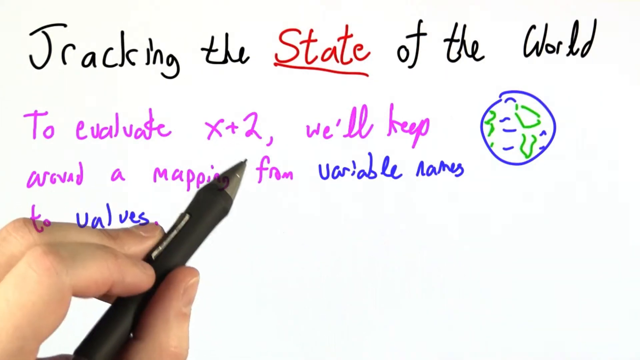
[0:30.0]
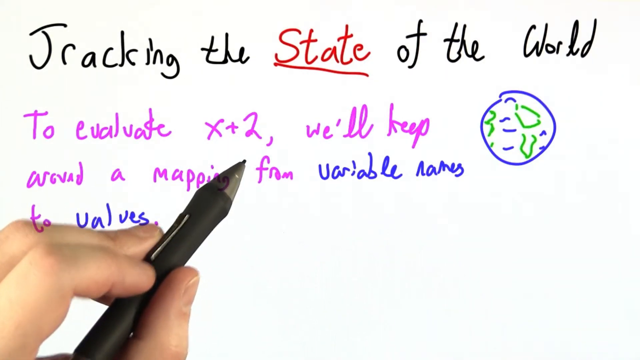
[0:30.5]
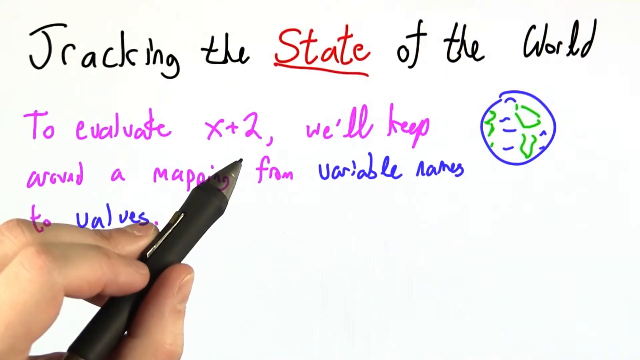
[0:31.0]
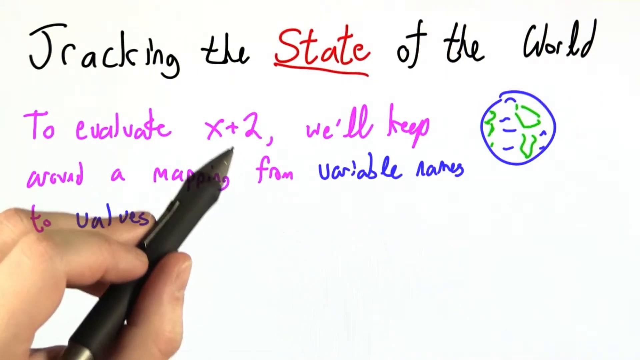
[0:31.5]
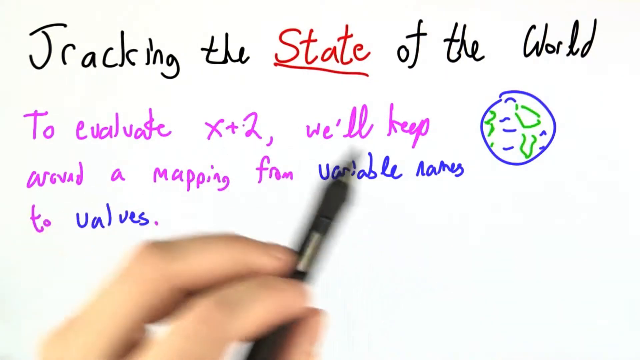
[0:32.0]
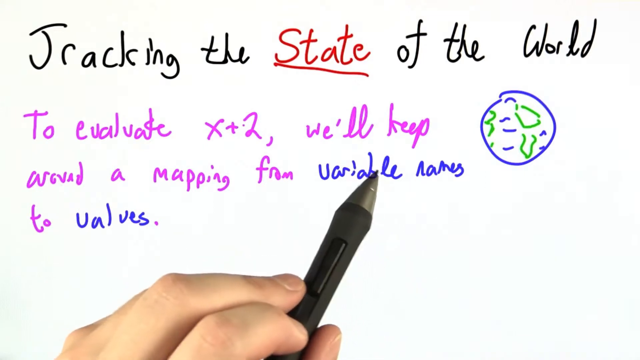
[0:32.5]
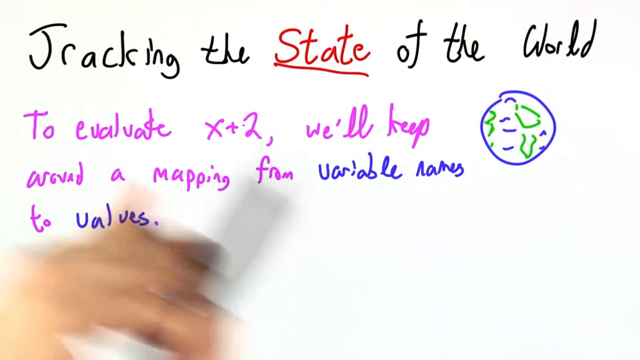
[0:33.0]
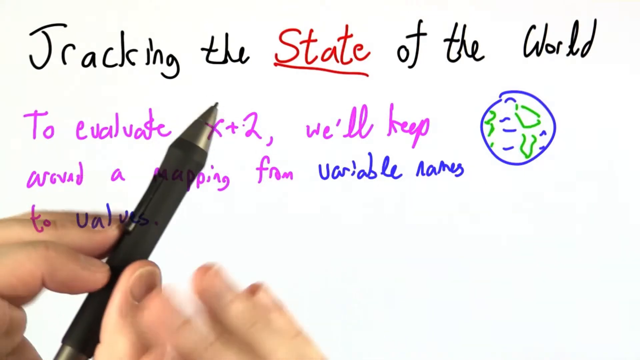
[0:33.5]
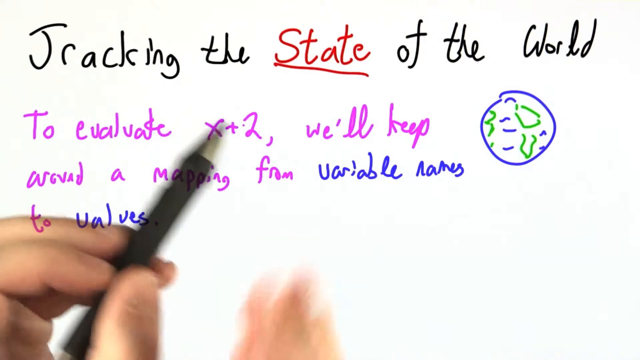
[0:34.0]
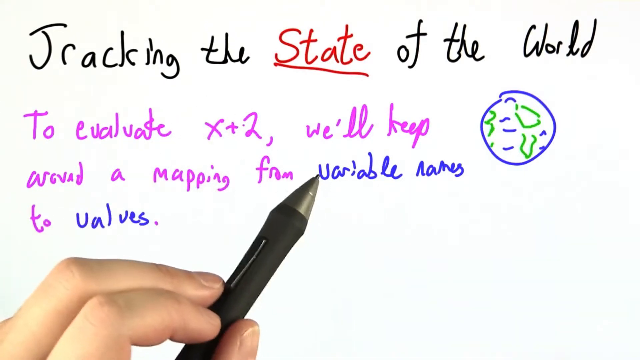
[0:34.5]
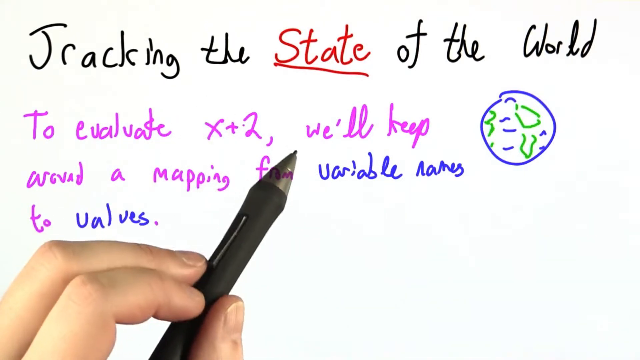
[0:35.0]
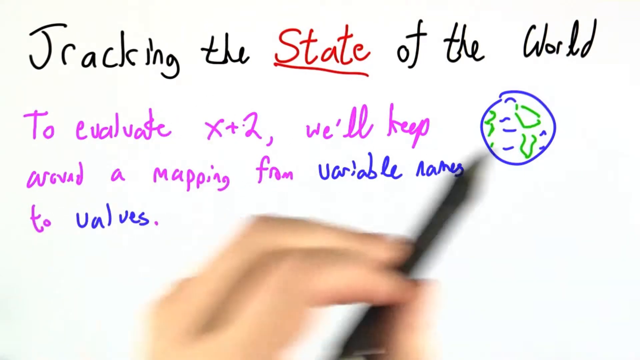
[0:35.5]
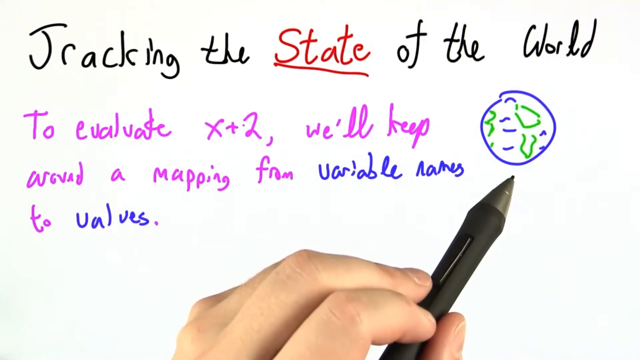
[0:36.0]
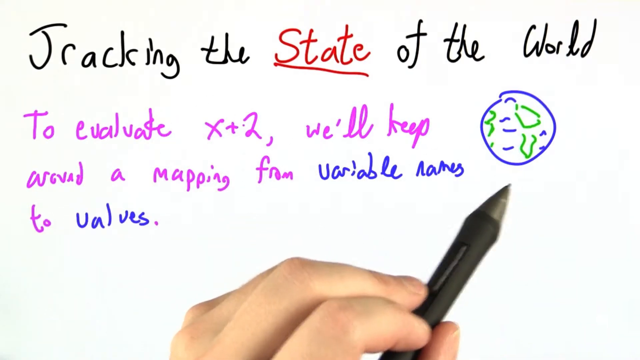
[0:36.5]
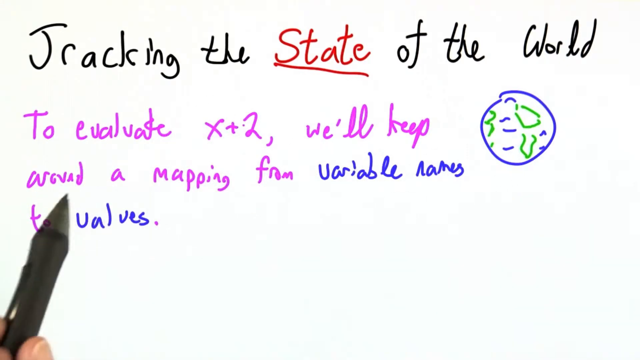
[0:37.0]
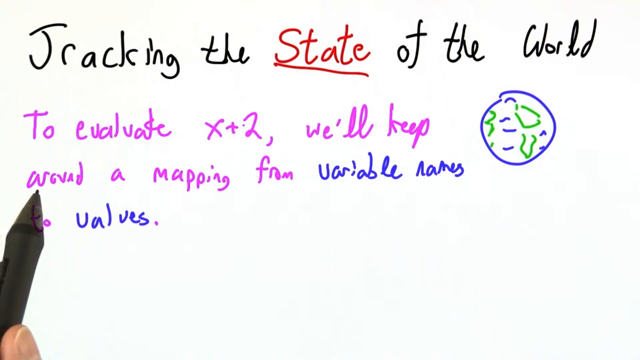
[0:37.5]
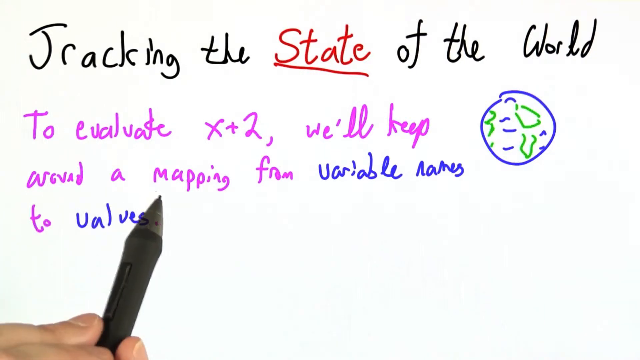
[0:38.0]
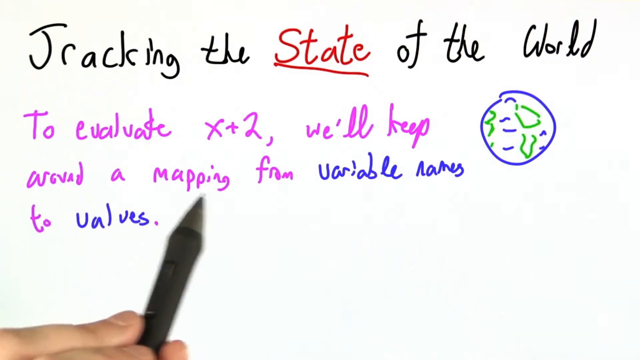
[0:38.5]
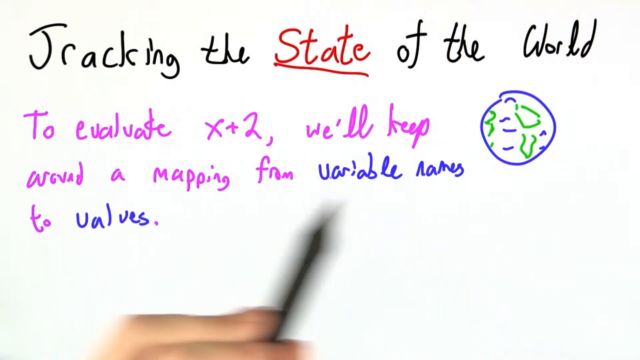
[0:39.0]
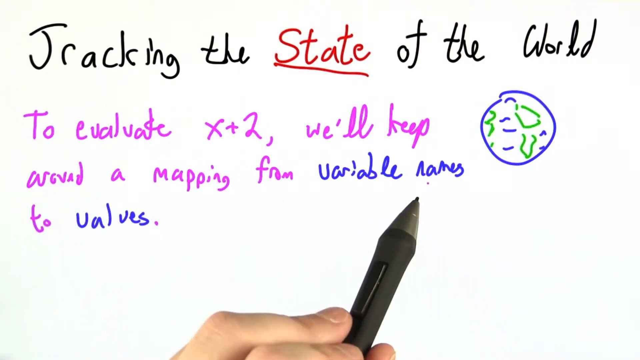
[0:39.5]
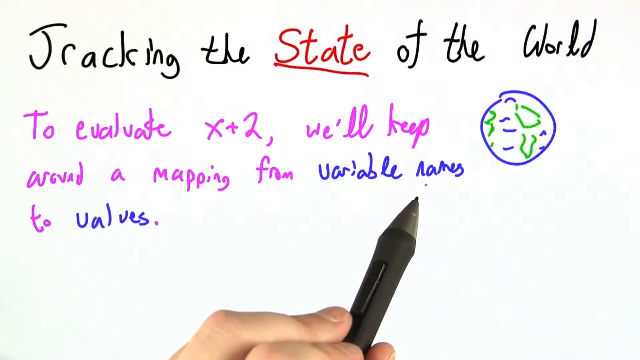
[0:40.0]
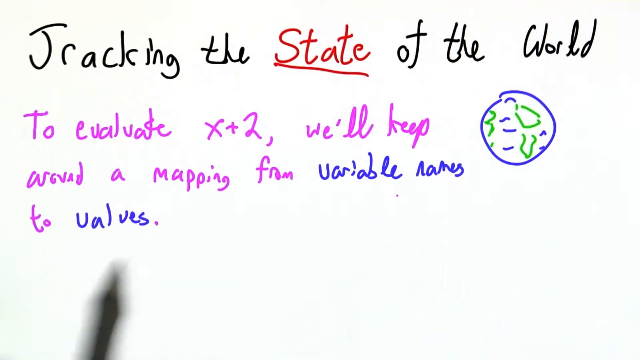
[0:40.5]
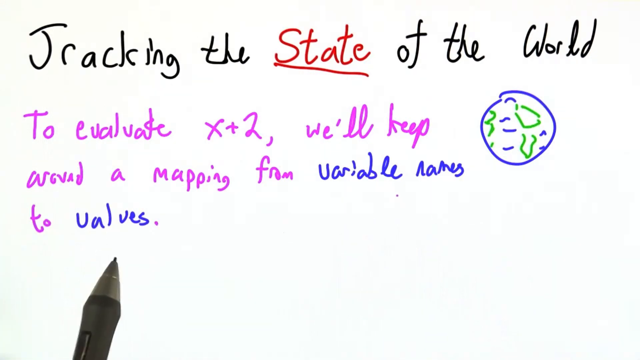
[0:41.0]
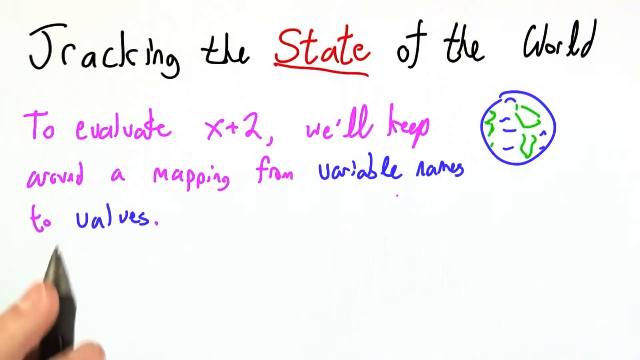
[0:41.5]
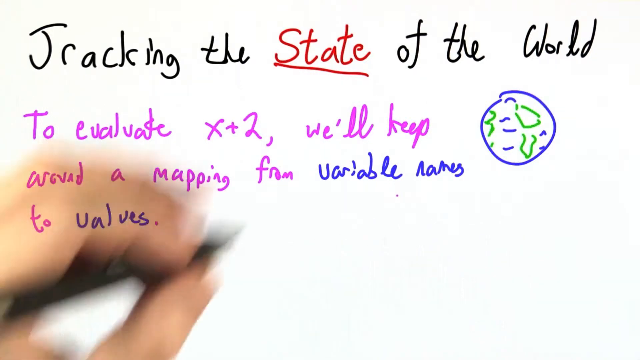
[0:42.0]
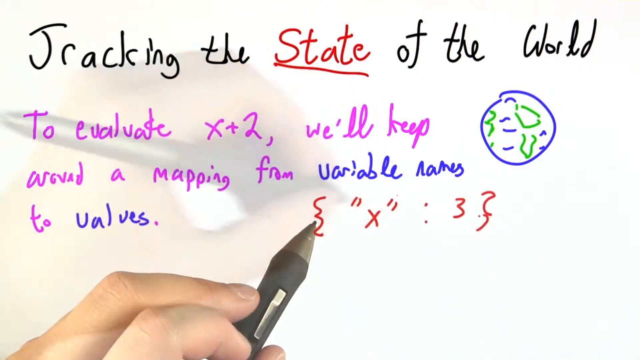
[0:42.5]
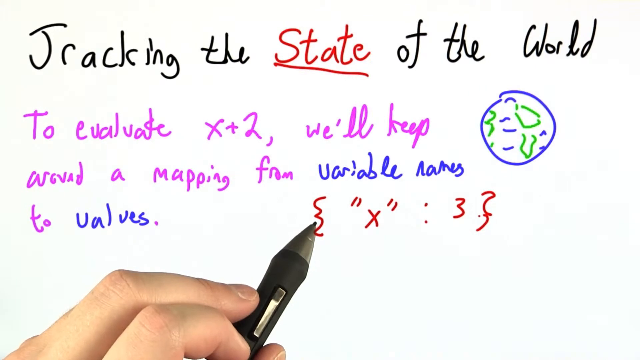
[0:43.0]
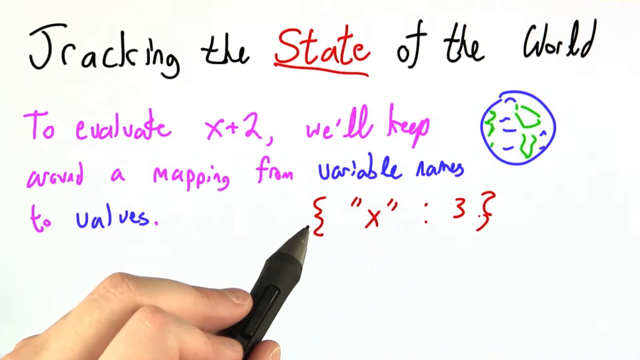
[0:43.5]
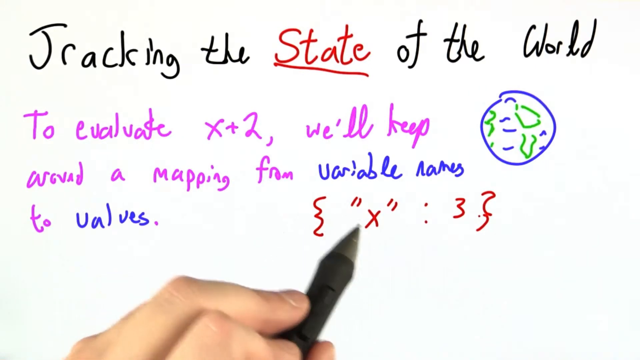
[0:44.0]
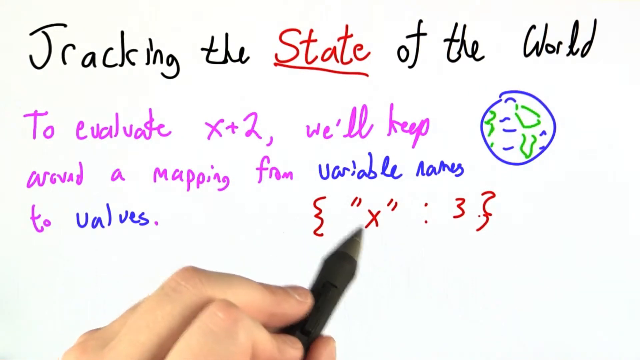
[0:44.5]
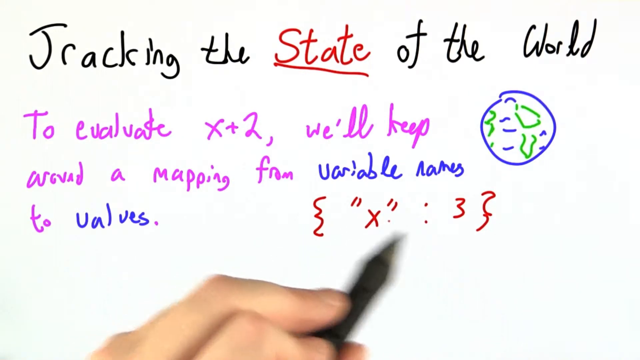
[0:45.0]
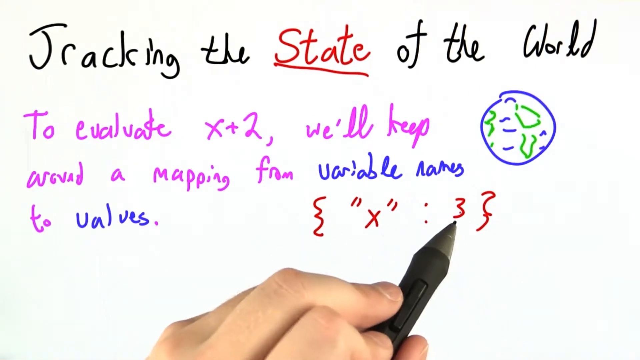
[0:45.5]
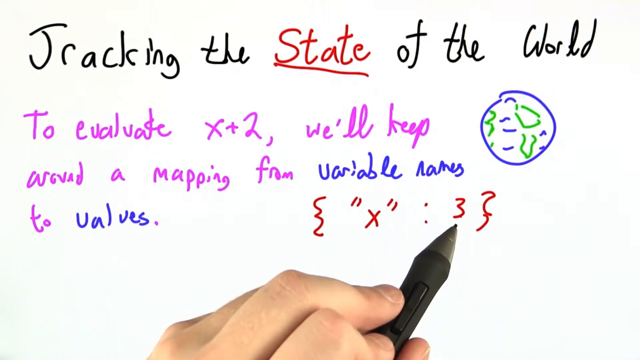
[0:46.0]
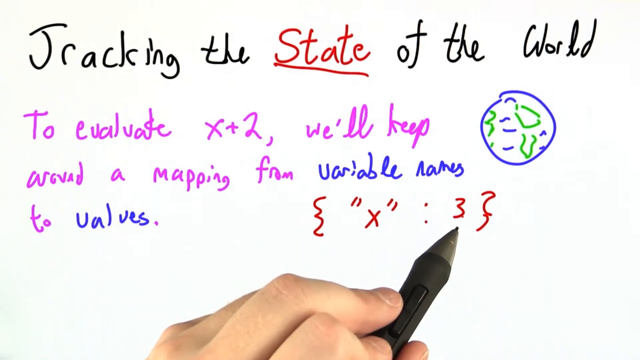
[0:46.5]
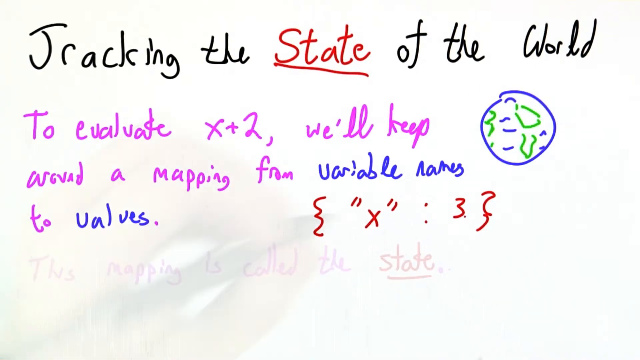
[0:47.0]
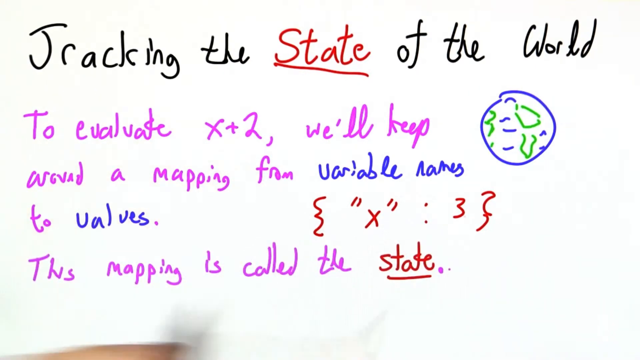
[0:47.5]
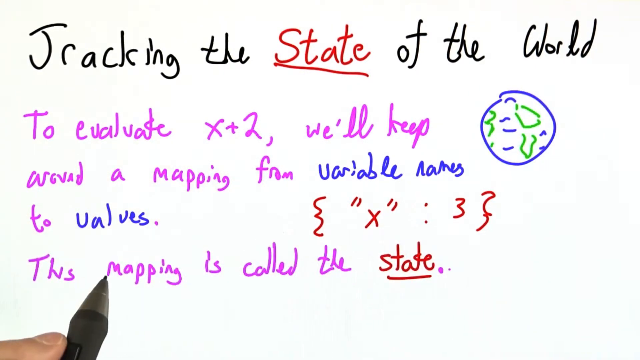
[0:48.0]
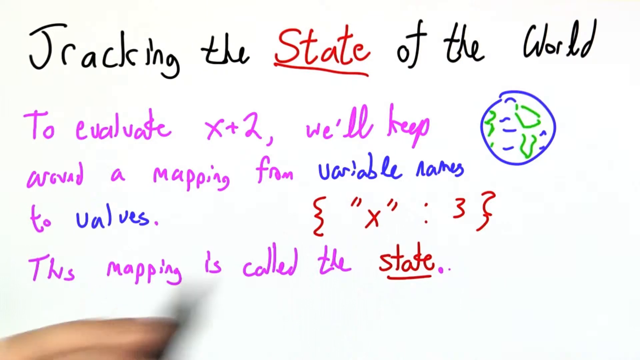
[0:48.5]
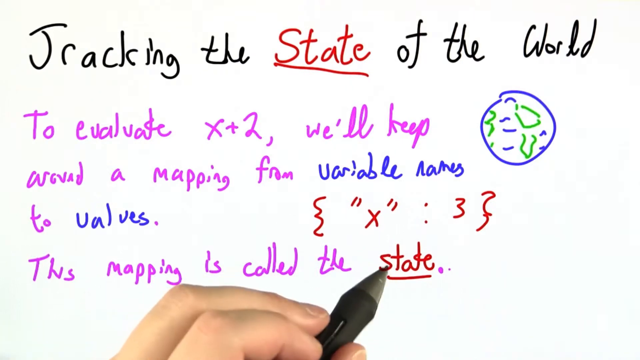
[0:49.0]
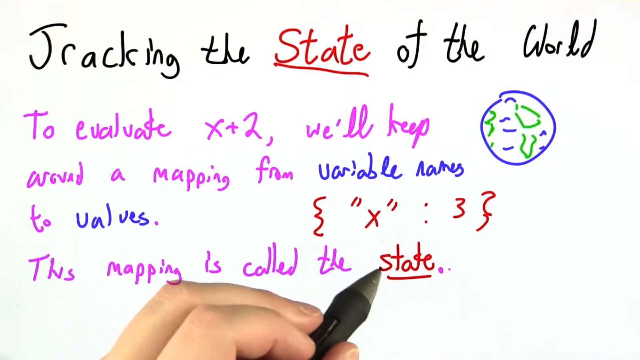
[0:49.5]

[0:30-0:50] The person keeps pointing with the digital pen to different areas of the written text, at some points also using the other hand to point to parts of the sentence and to gesticulate. Below "variable names" and "values", they handwrite something like an equation: within brackets, x equals what seems to be a three. They point to these two new values within the brackets. Another sentence is then written, reading "this mapping is called the state", with the word "state" in a different color ink and underlined.